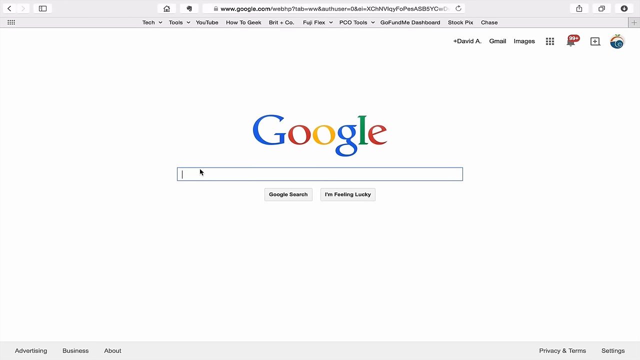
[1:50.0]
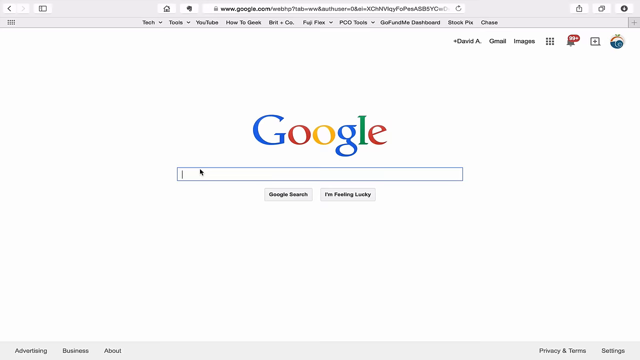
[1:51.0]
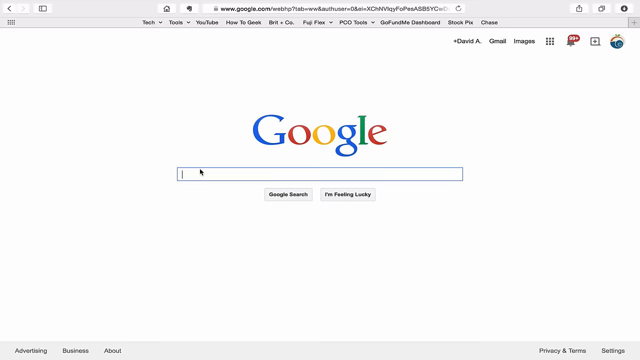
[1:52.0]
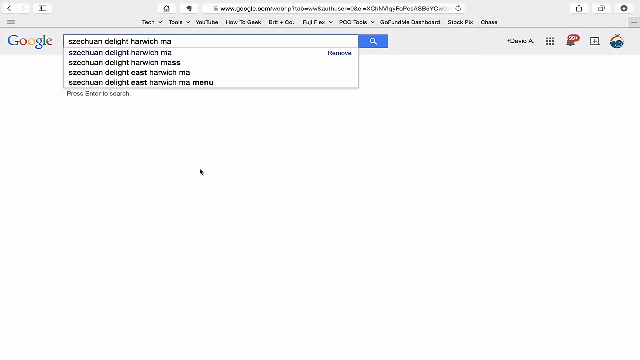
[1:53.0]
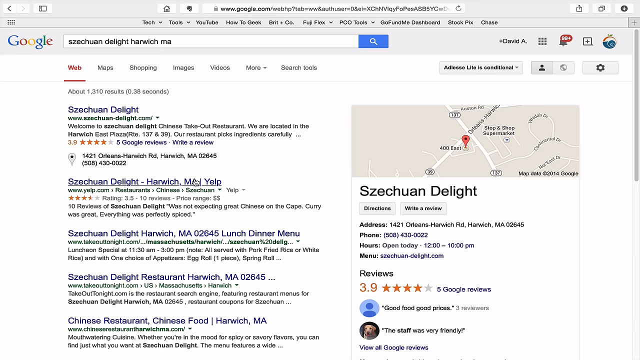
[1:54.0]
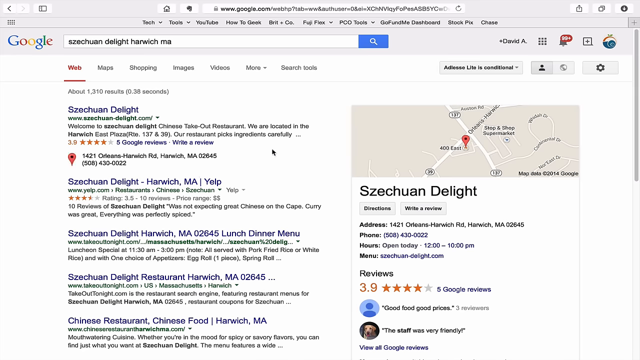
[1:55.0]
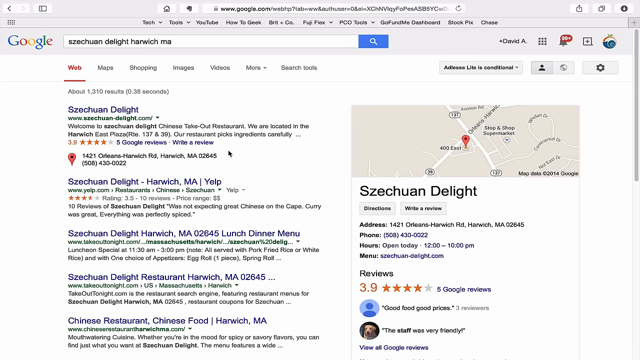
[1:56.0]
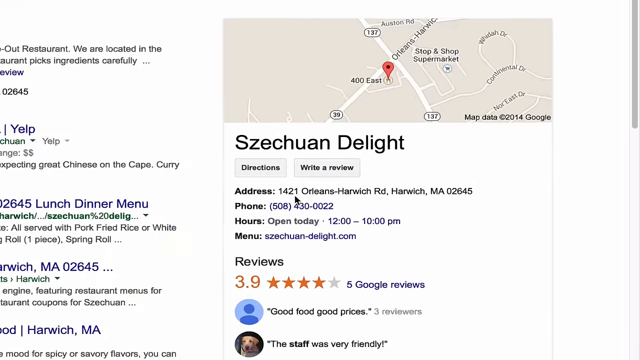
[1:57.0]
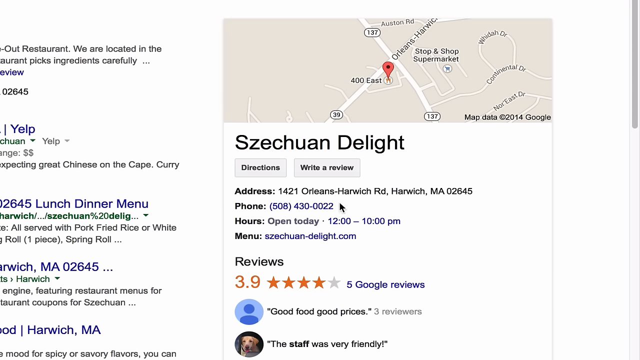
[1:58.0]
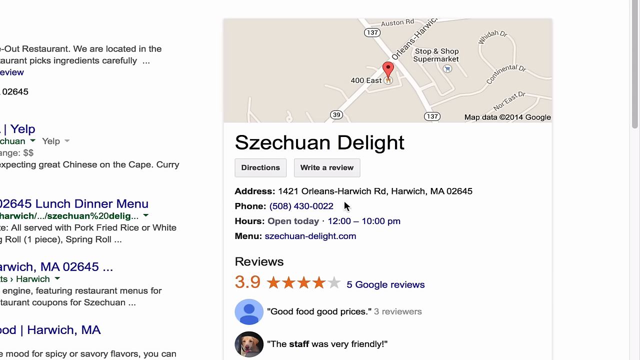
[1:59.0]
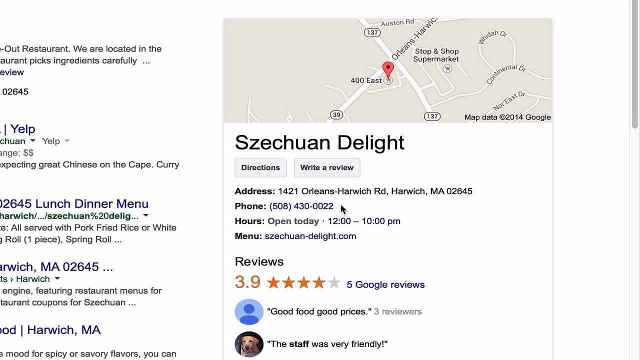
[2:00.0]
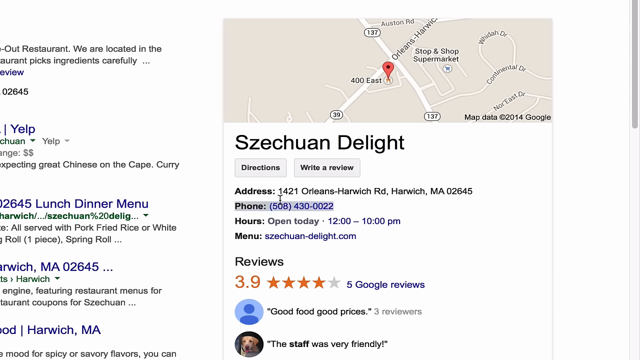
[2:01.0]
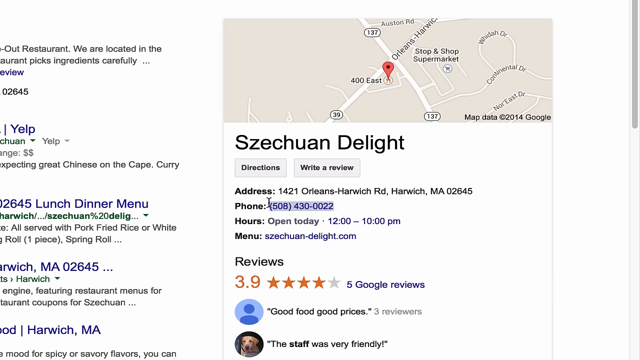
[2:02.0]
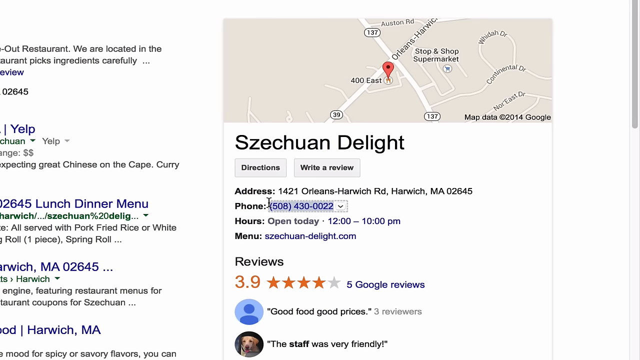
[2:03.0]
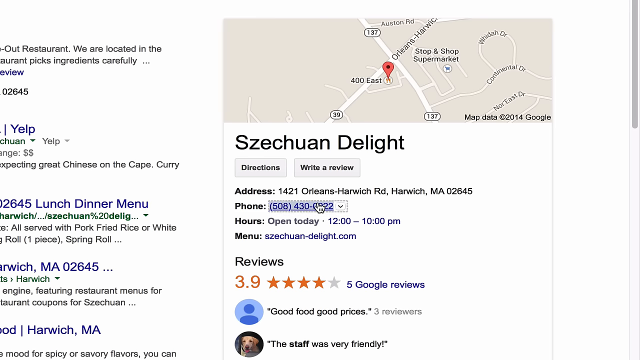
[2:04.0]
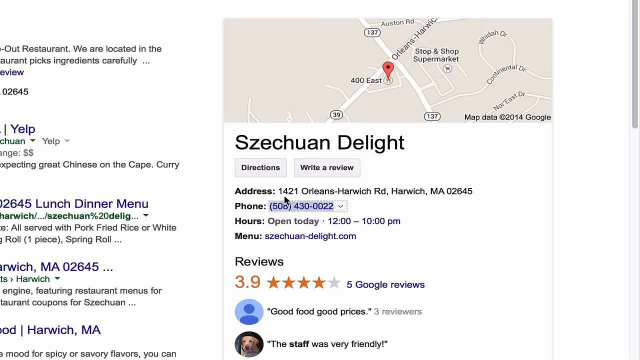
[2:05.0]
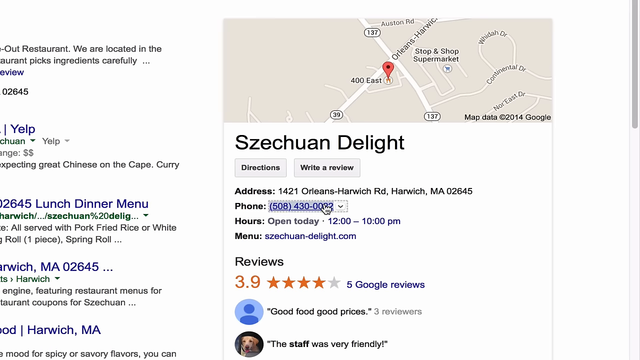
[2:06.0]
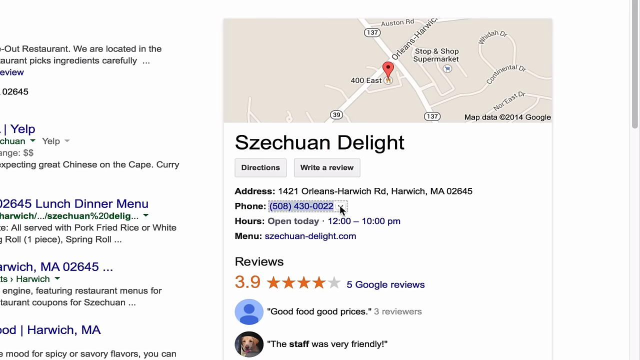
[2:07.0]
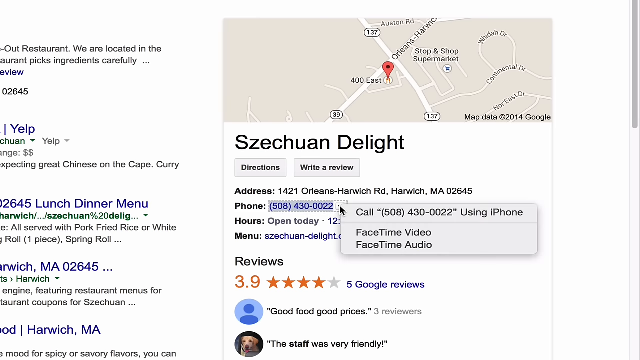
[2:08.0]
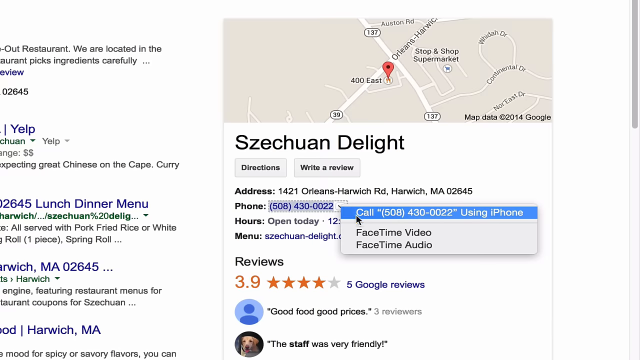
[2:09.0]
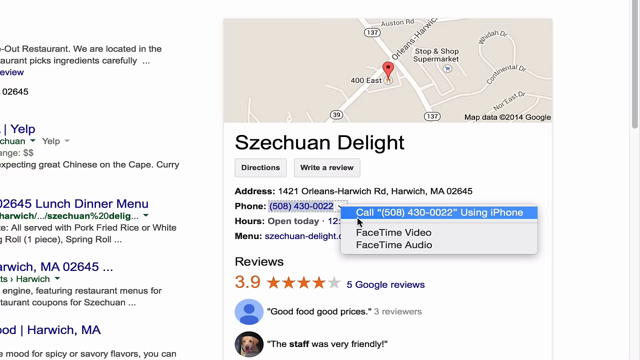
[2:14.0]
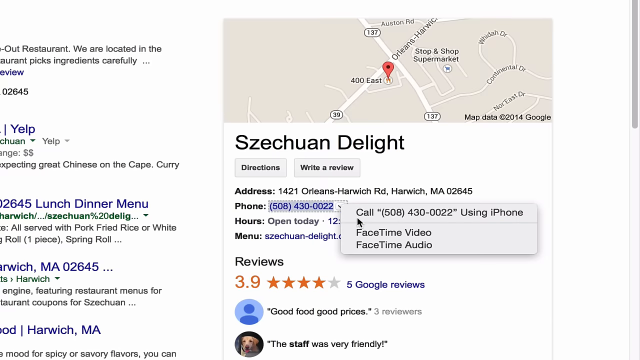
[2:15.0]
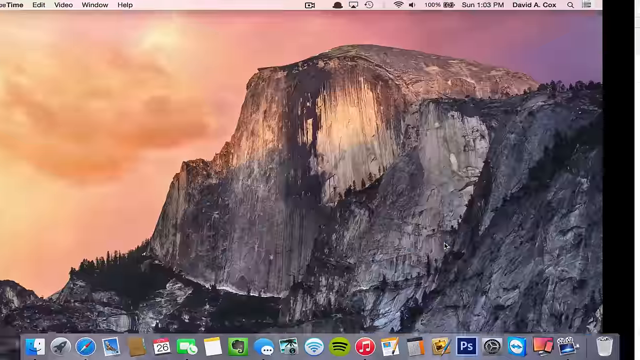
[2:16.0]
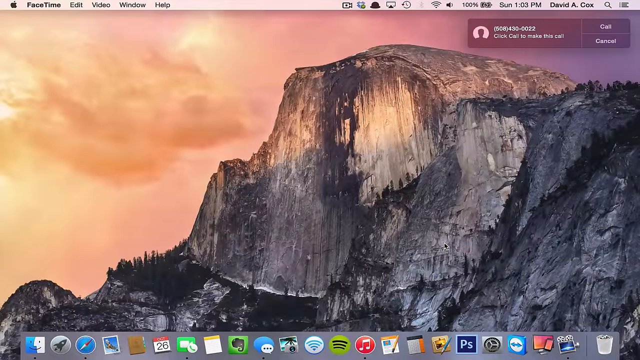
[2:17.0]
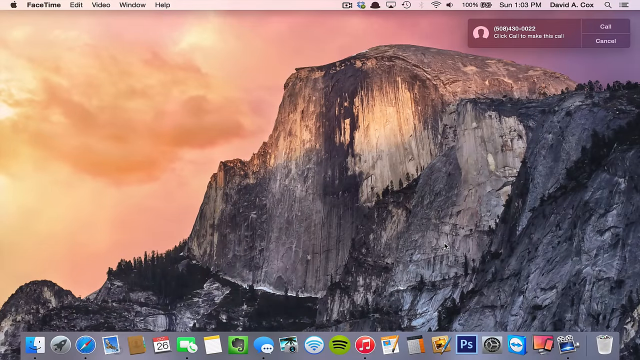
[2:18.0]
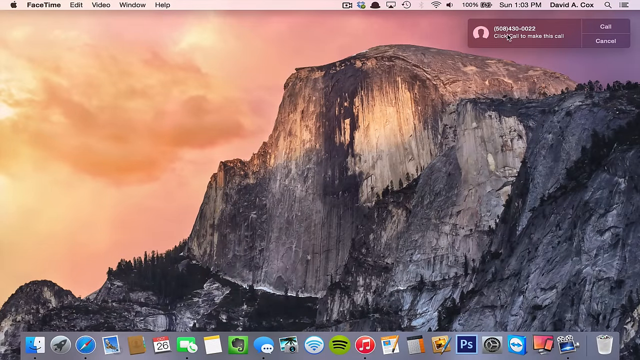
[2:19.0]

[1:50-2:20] A Google search page appears. Someone, probably the man with the microphone, types "Szechuan food", and a restaurant called "Szechuan Delight" comes up. Its website shows the address and phone number, and he highlights the phone number, the hours and the menu. A small screen comes up with call and the number, then "FaceTime audio" or "FaceTime video". The view goes back to the mountain face, then back to the Google page, which belongs to a David A. and shows Gmail, images and 99+ notifications.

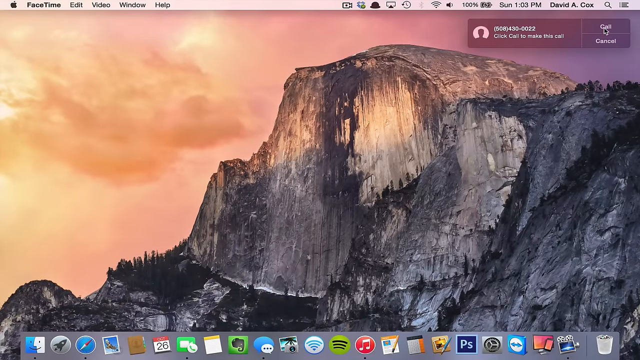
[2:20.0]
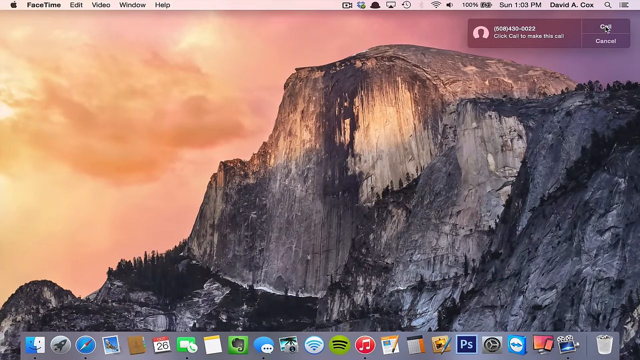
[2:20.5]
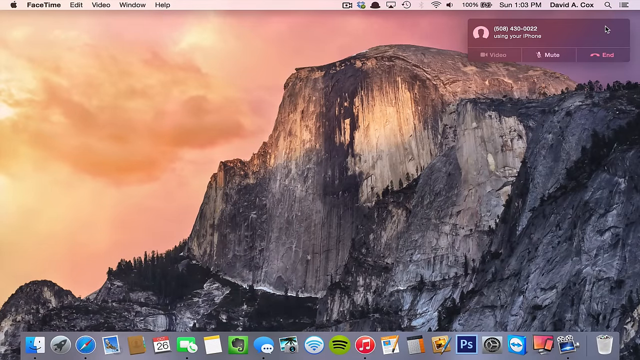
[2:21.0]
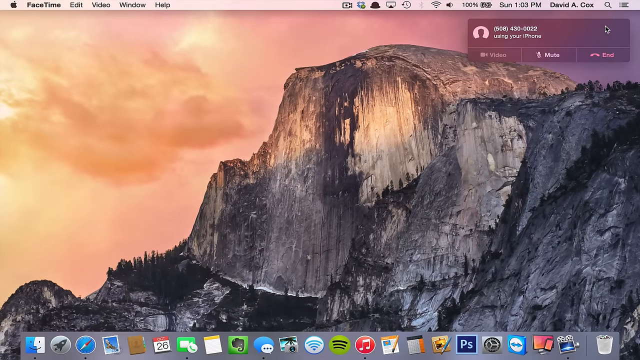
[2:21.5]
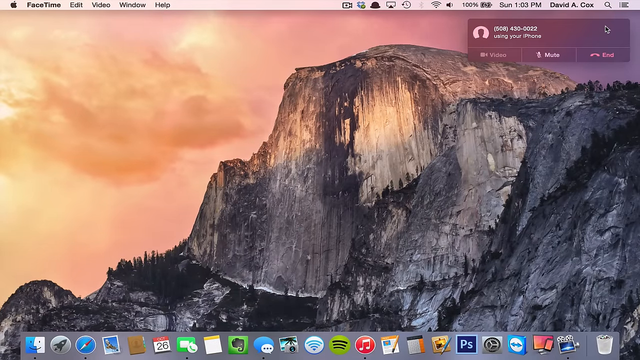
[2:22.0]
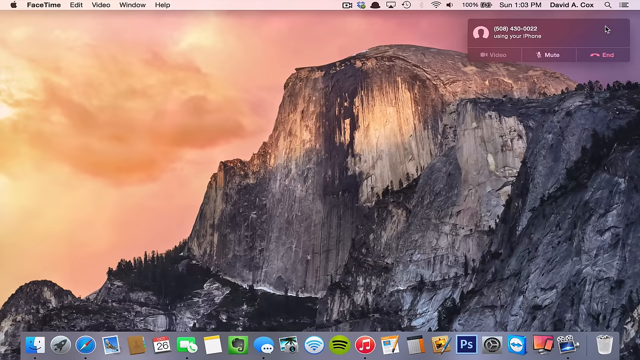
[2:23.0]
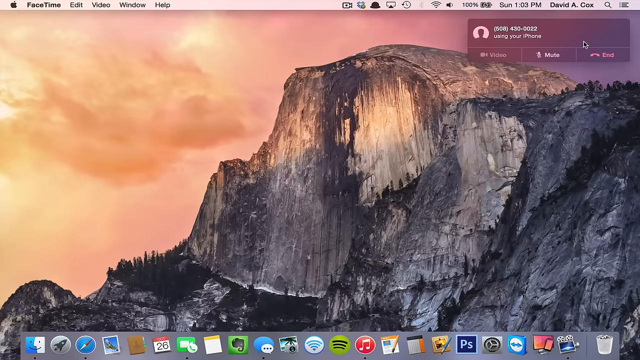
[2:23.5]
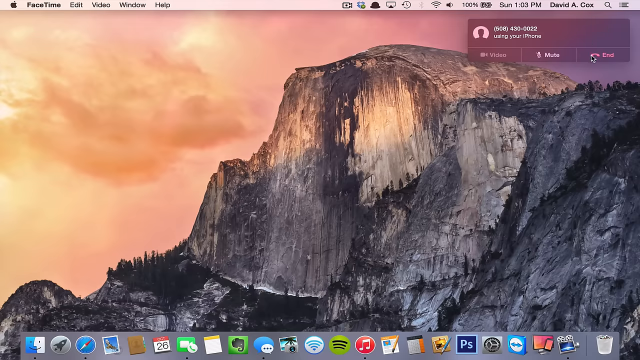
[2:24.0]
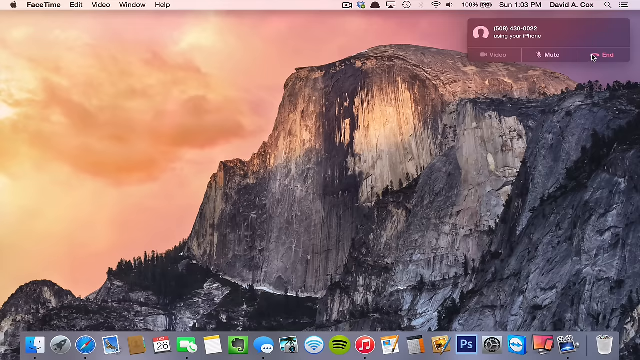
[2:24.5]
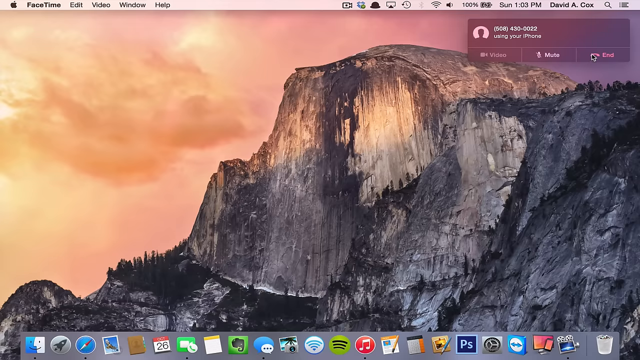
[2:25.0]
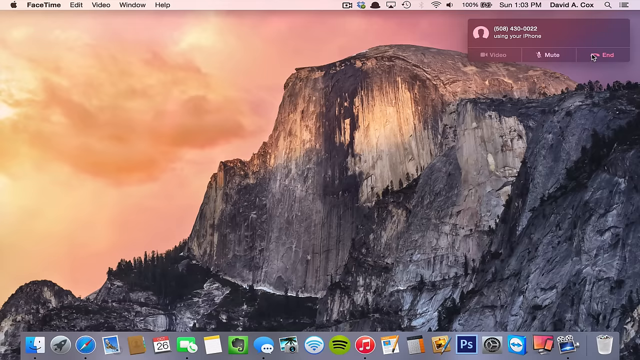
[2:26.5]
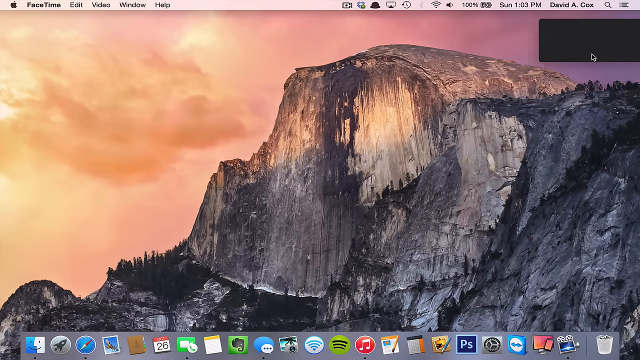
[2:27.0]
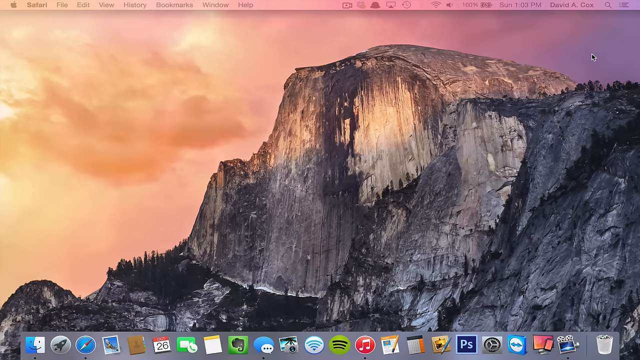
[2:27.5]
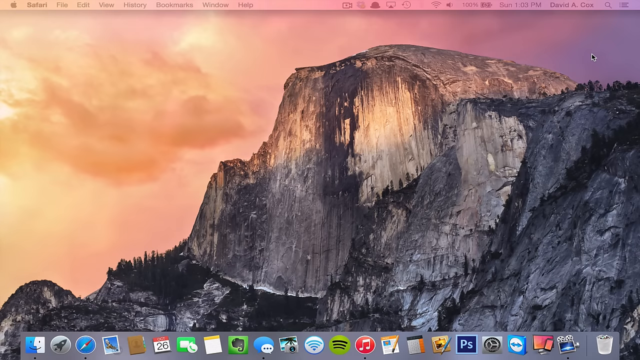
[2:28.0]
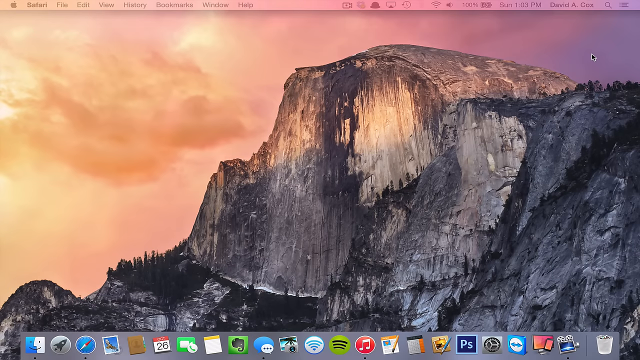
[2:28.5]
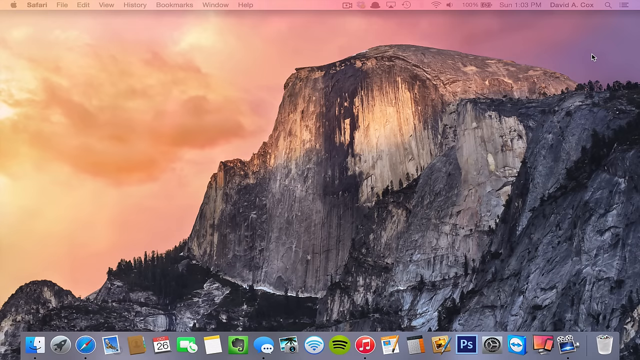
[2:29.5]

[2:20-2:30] The view is back on the mountain face. The sky has a pinkish-orange cast, with several clouds. In the upper right-hand corner, right above the top of the mountain, is a box with a silhouette and the phone number "508-430-0022". Underneath it reads "click call to make this call". On the right-hand side of that box is a box with "call" on top and "cancel" below. The cursor is on call, so the call seems about to be placed as the shot ends.